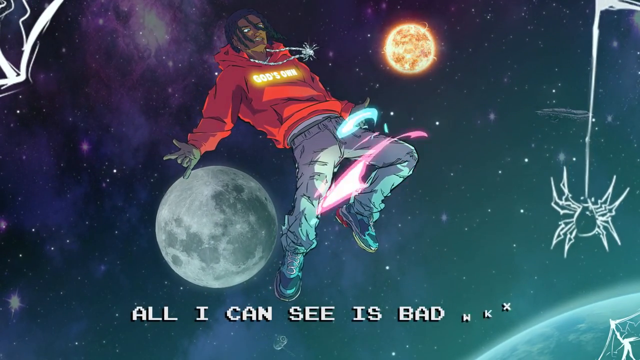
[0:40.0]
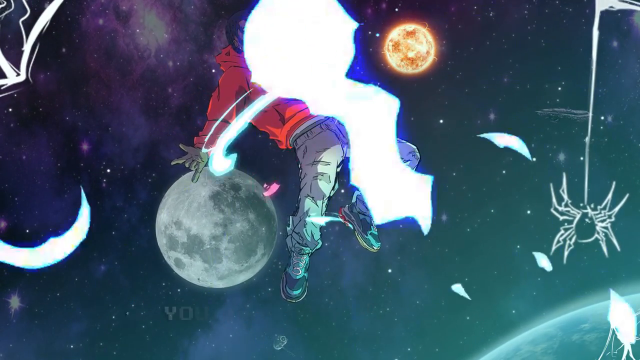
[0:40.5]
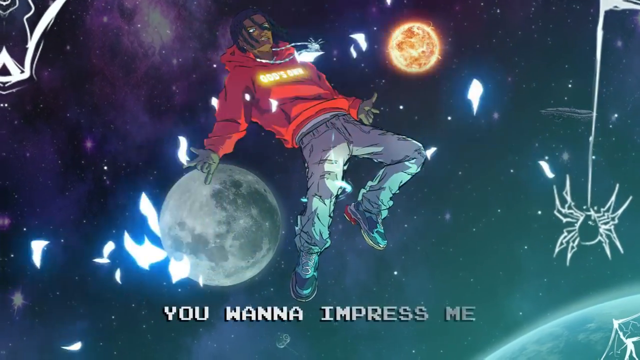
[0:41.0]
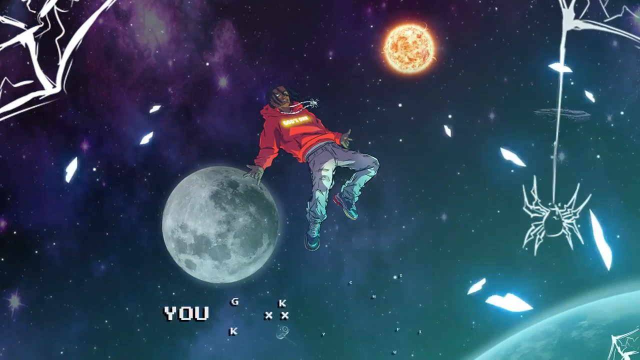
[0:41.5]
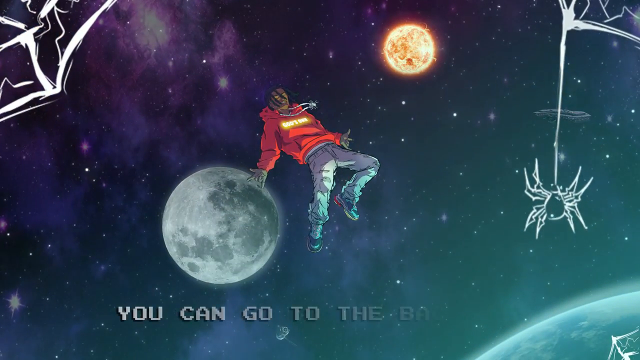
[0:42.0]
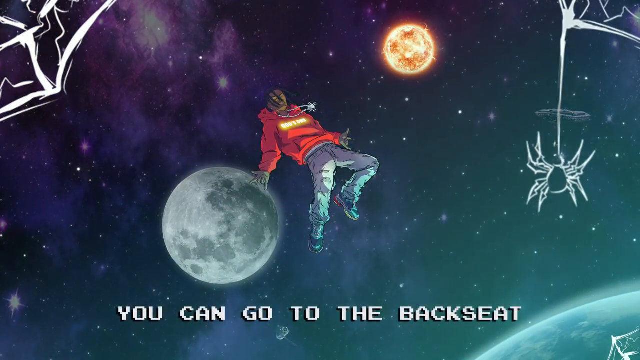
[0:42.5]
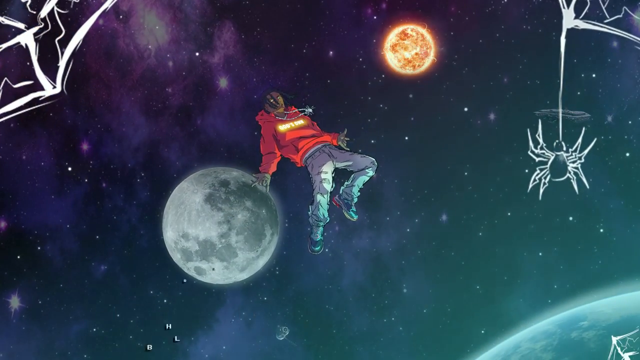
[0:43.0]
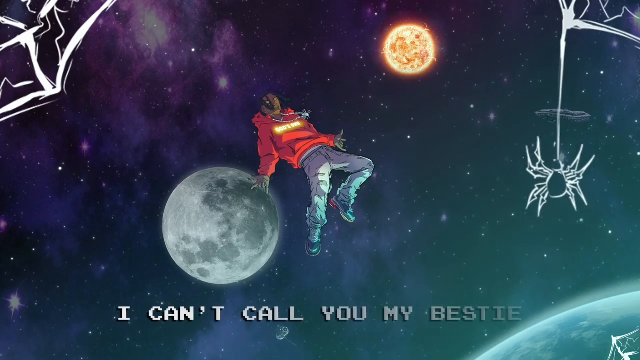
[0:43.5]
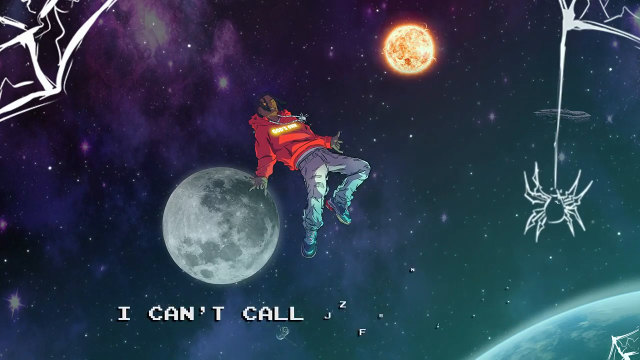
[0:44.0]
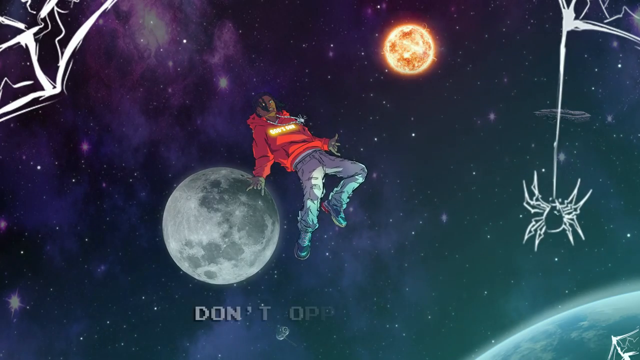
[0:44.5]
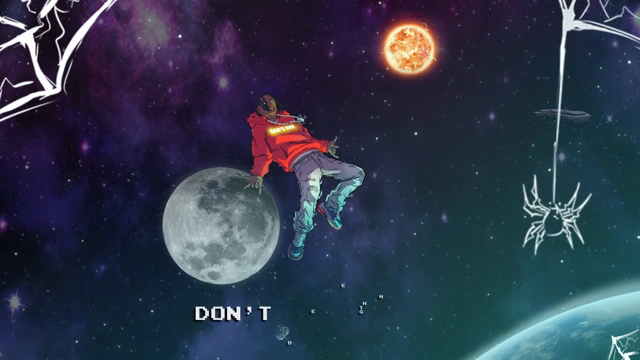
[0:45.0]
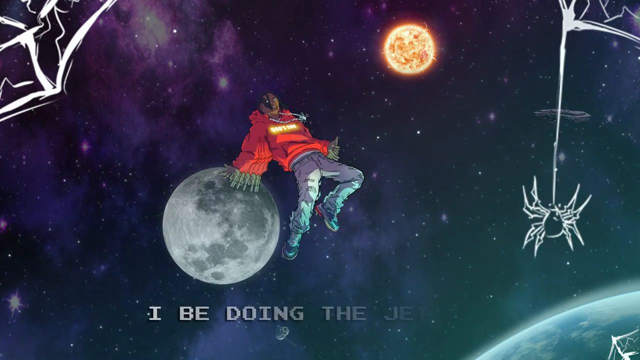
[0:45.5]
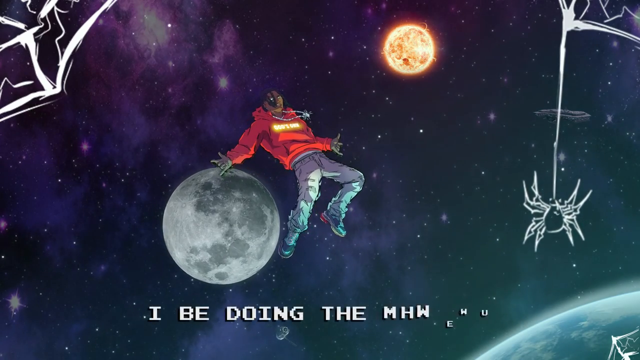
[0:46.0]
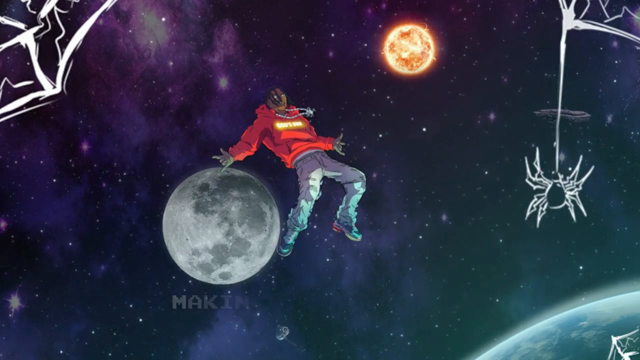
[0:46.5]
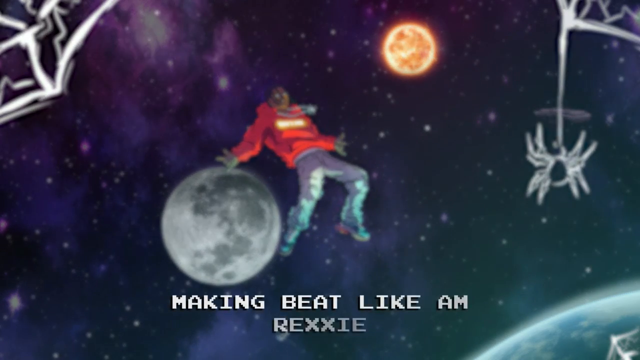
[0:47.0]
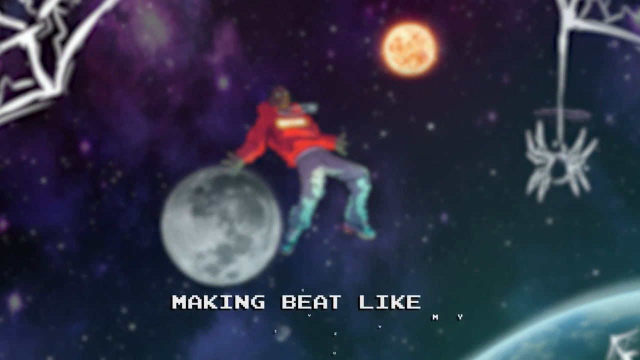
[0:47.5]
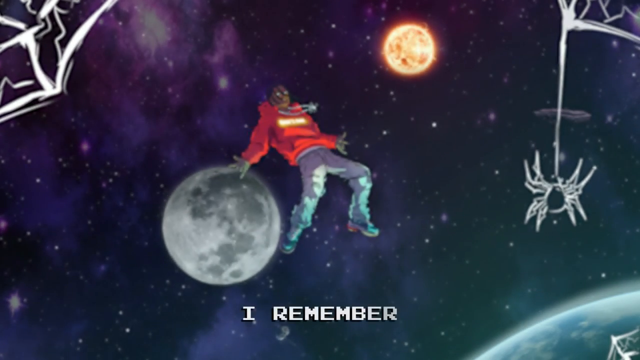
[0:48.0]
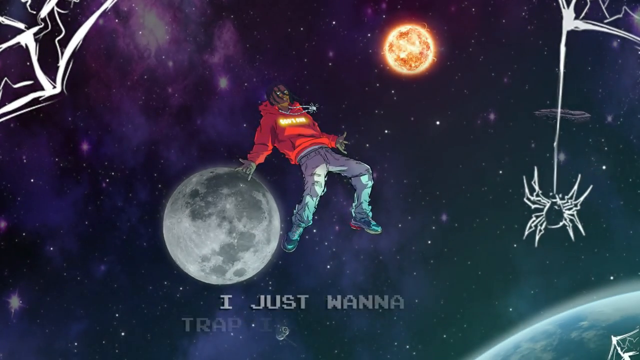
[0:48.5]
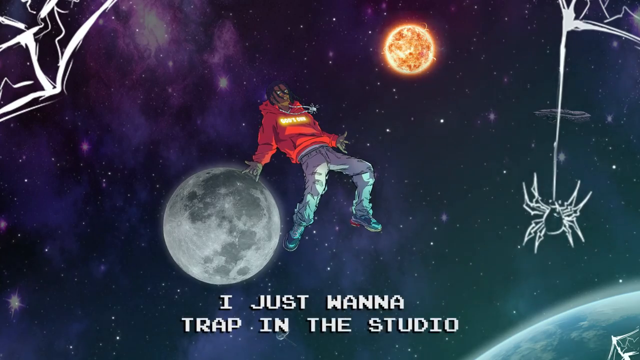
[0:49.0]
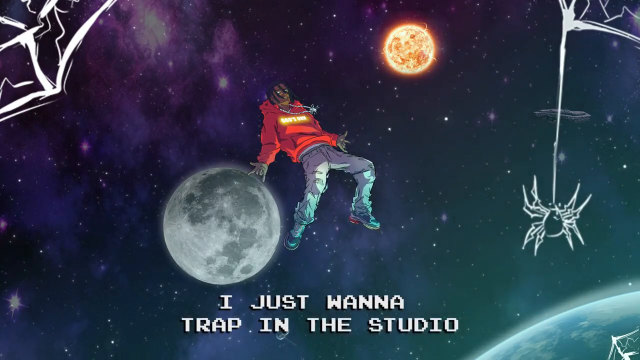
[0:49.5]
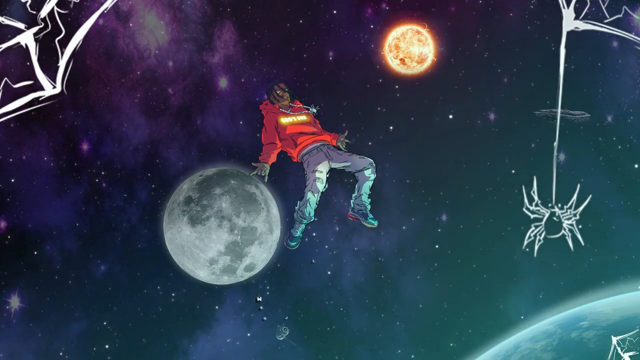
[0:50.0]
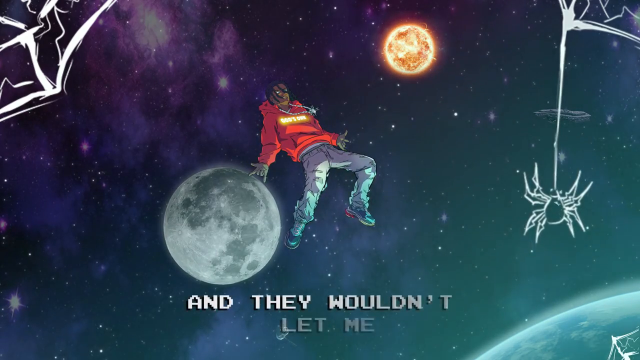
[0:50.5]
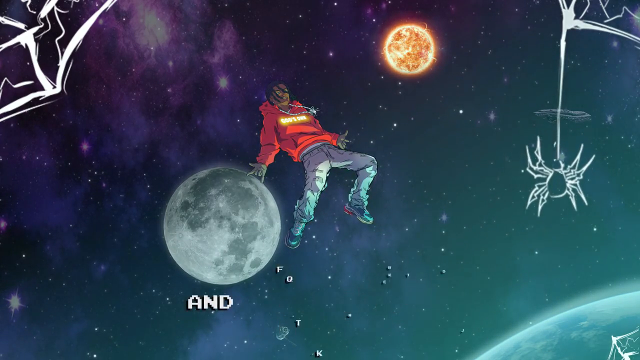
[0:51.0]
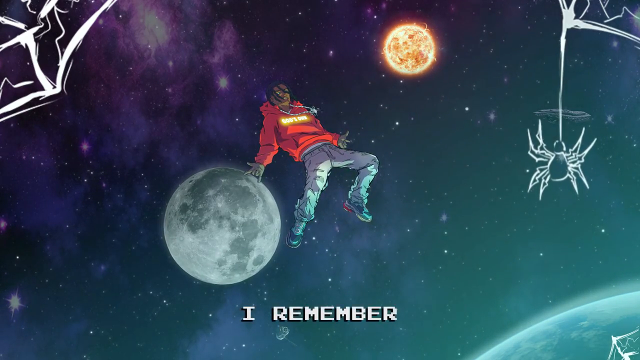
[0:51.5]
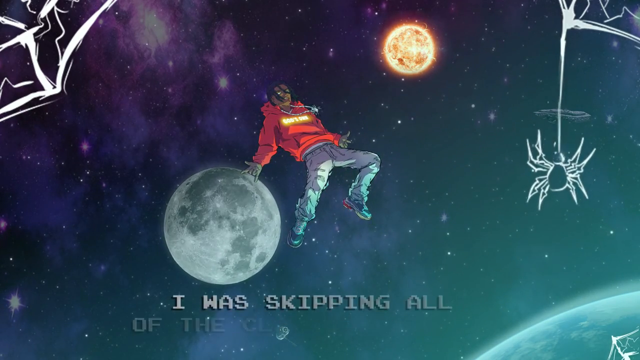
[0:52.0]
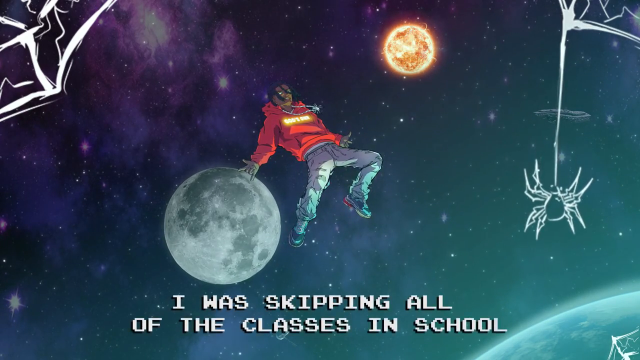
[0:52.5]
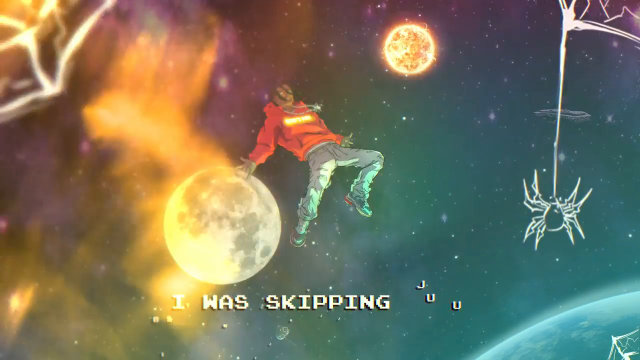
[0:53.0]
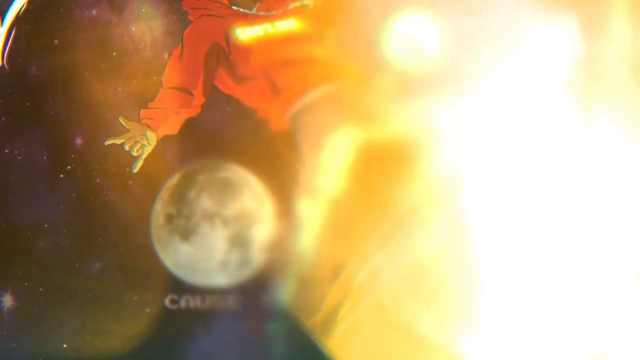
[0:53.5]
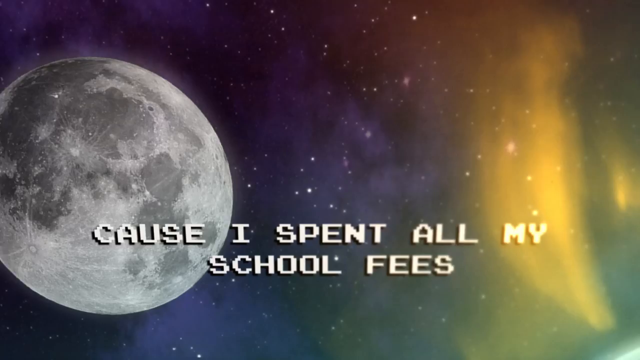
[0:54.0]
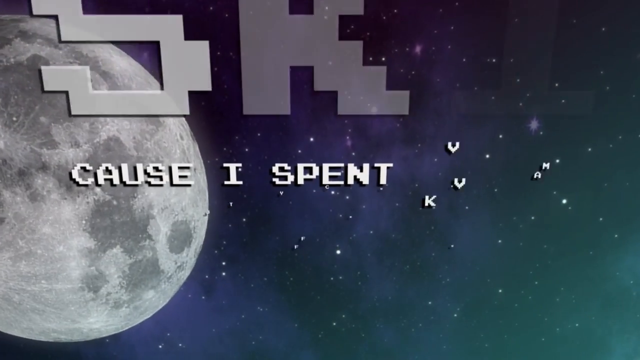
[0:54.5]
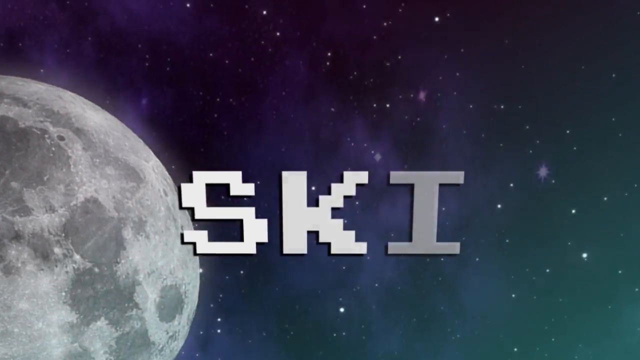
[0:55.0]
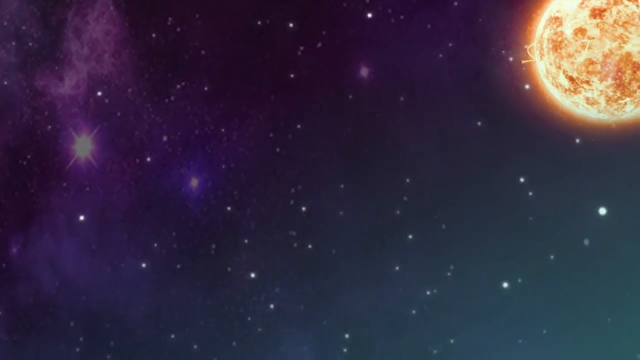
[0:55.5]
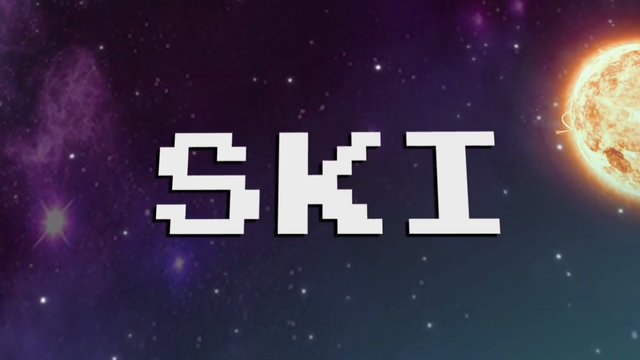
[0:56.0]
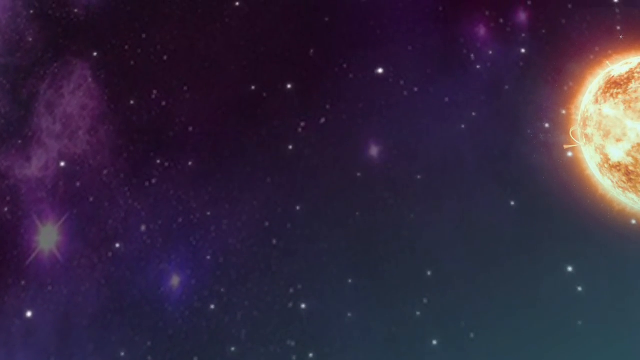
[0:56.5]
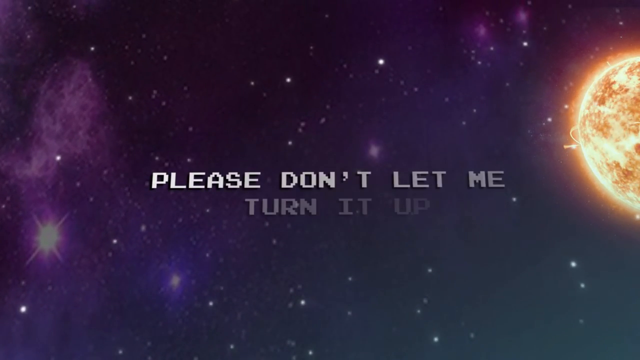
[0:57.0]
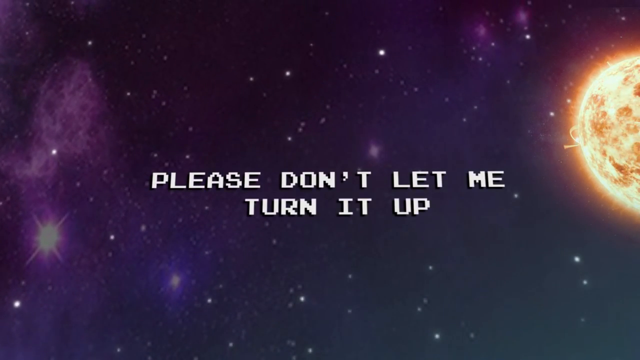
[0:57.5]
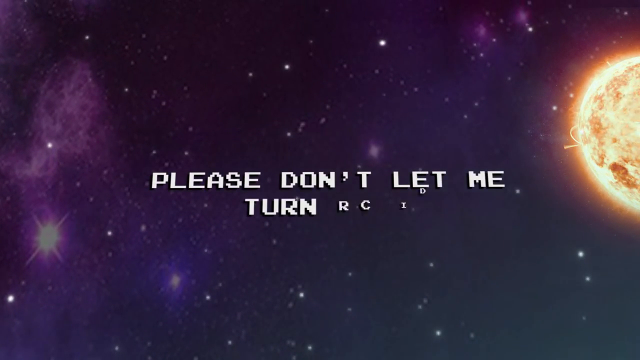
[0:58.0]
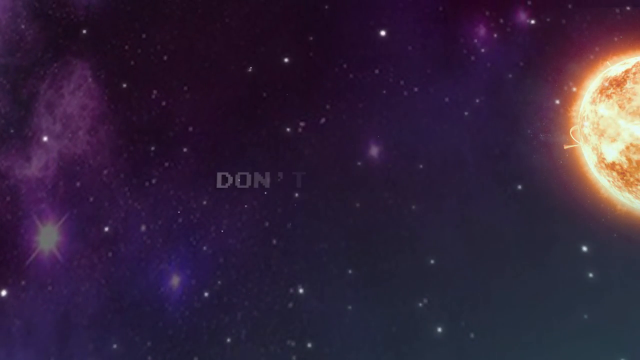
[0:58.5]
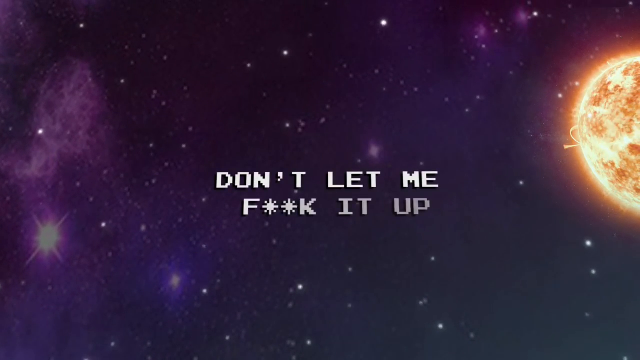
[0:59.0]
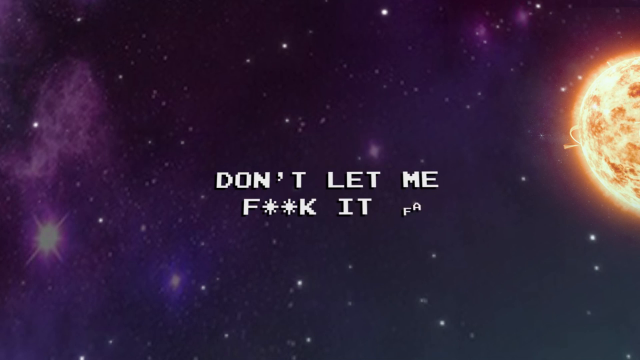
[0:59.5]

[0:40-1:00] The lyrics move by quickly. The main character is still sort of floating in space, with the moon and sun in the background. A spider dangles from the spiderweb, kind of dropping down in the top right corner, where the web is; there also appears to be a web in the top left corner. The word "ski" comes up twice in large letters in addition to the fast-moving lyrics. The night sky has shades of purples and blues, the fiery sun is smaller in the distance, and a moon is a little closer to the main character. Stars and what seems to be the Milky Way are in the background. The scene ends with sort of an explosion of bright light.